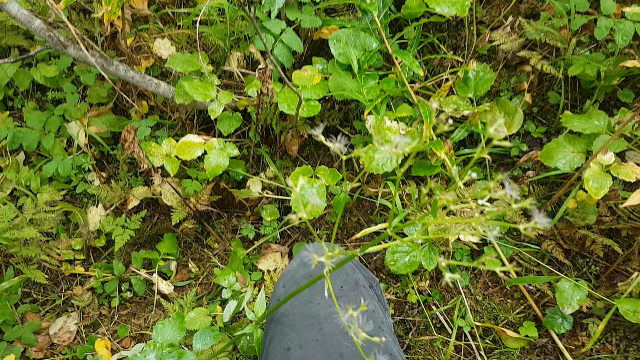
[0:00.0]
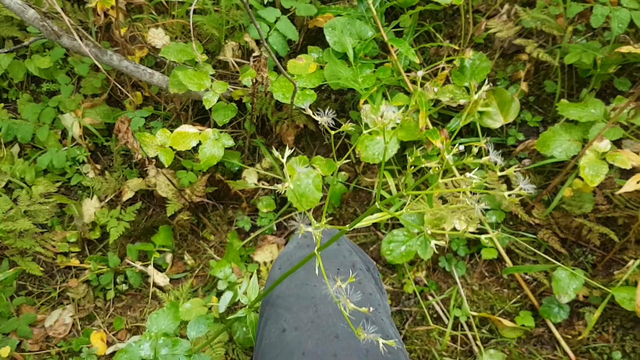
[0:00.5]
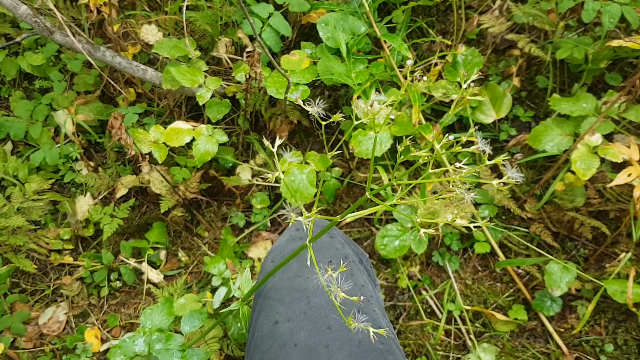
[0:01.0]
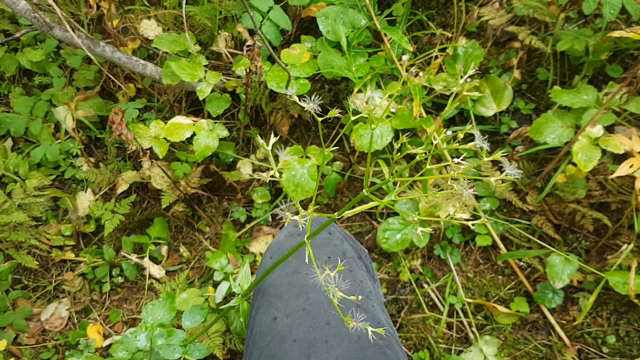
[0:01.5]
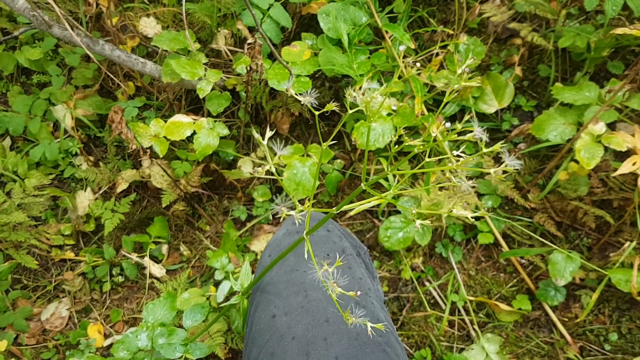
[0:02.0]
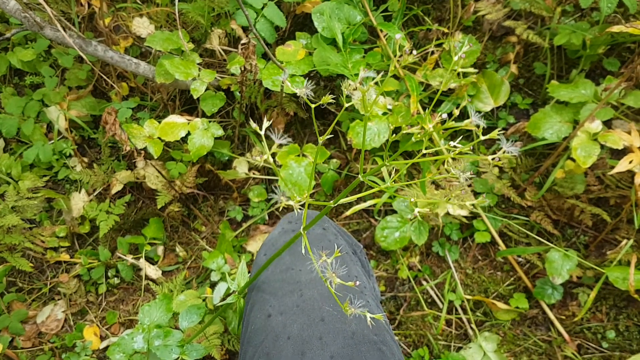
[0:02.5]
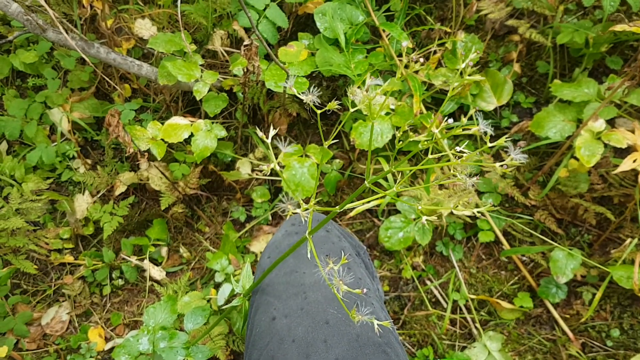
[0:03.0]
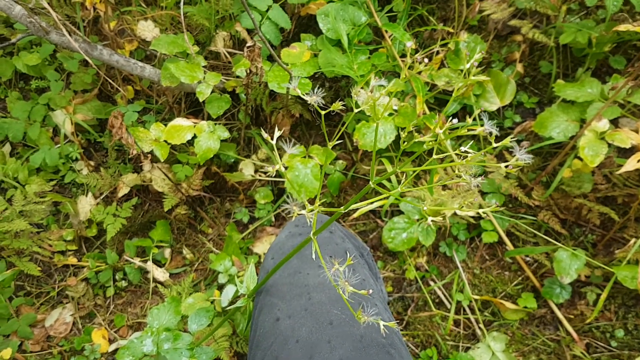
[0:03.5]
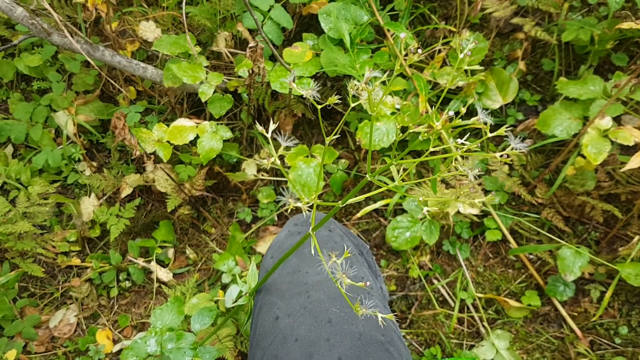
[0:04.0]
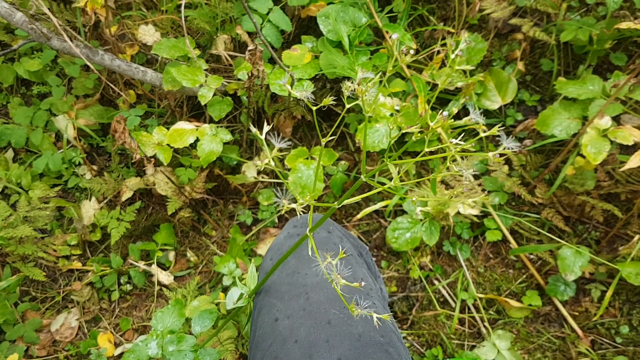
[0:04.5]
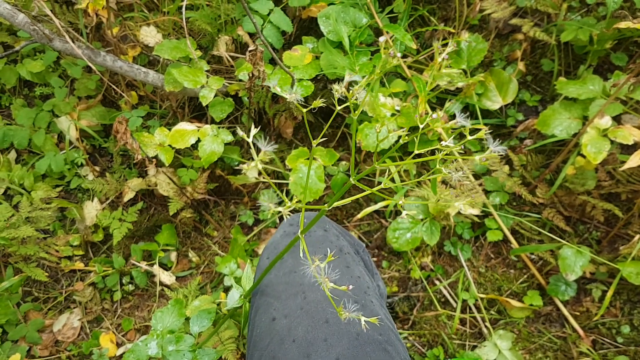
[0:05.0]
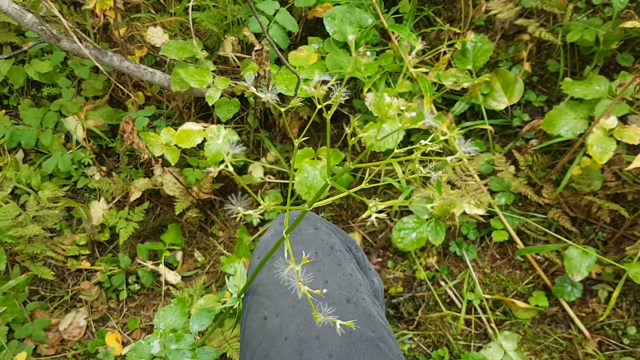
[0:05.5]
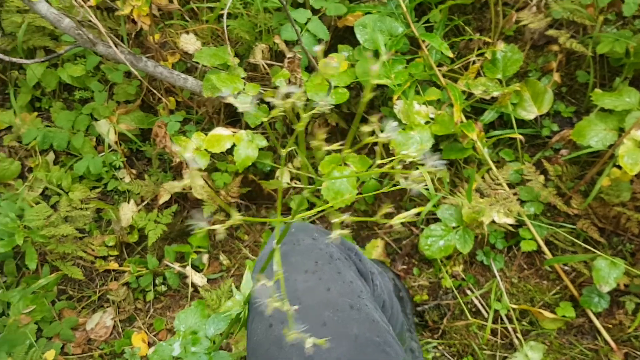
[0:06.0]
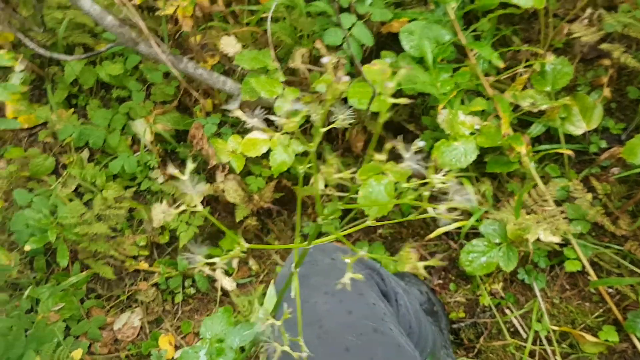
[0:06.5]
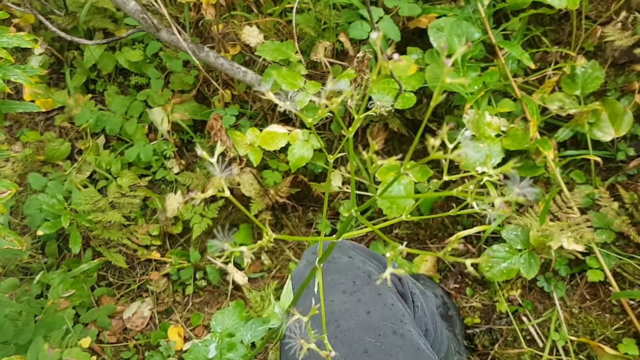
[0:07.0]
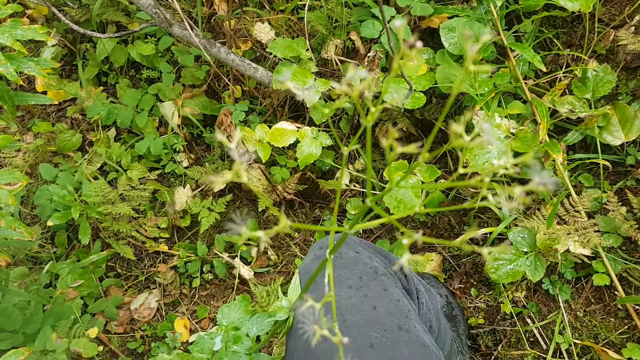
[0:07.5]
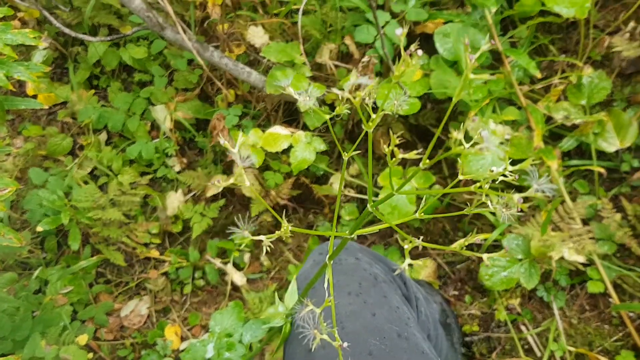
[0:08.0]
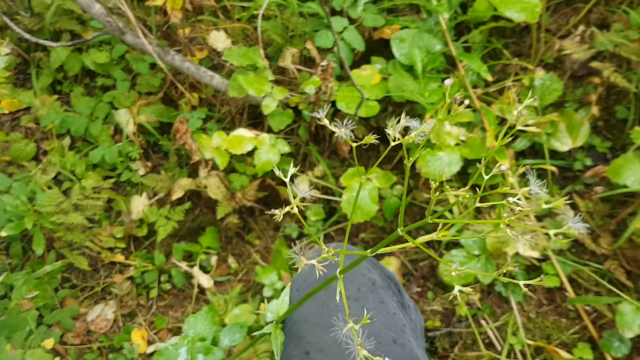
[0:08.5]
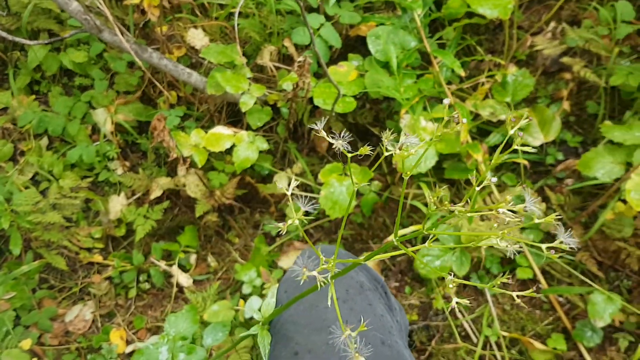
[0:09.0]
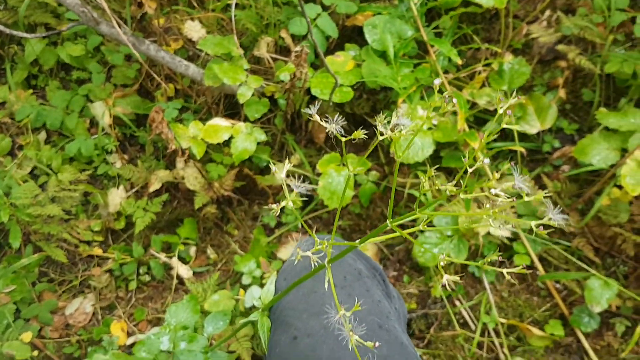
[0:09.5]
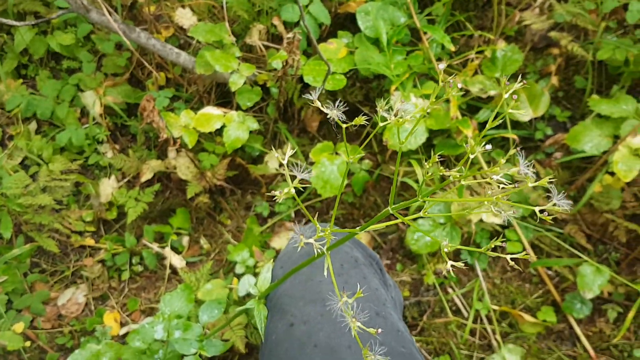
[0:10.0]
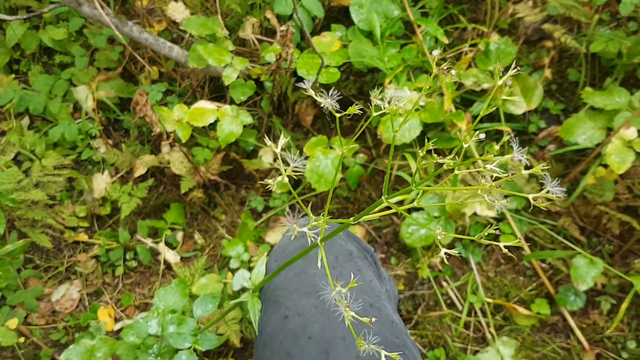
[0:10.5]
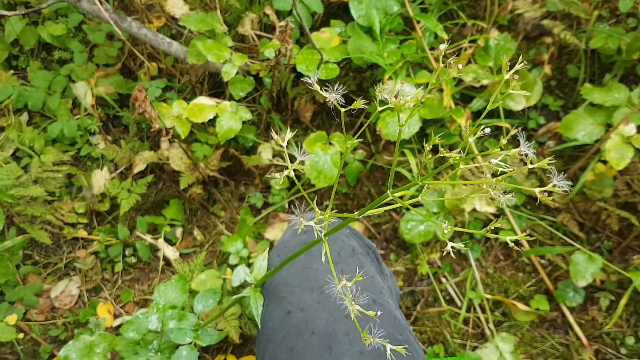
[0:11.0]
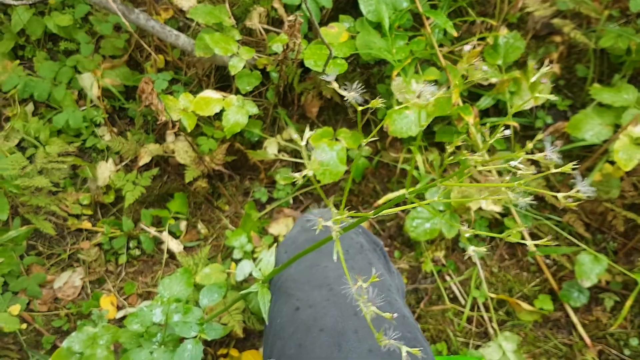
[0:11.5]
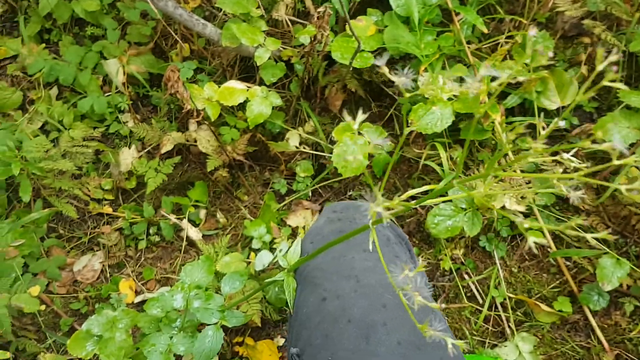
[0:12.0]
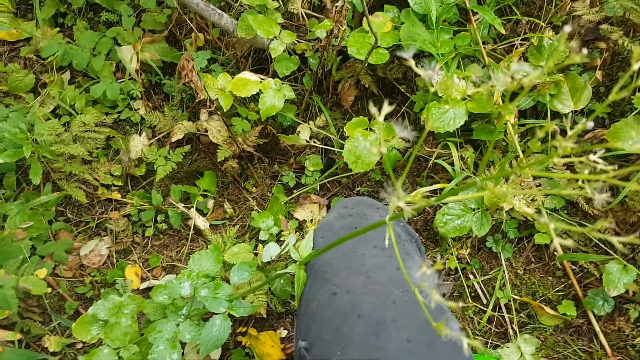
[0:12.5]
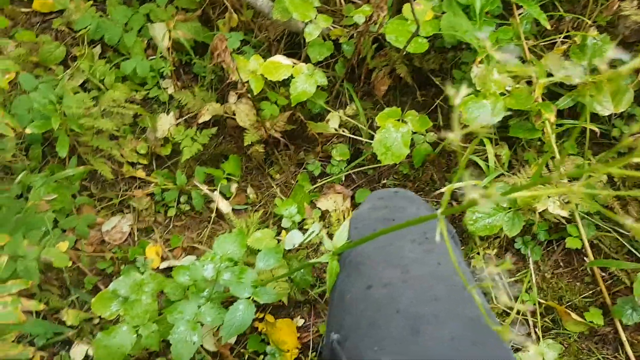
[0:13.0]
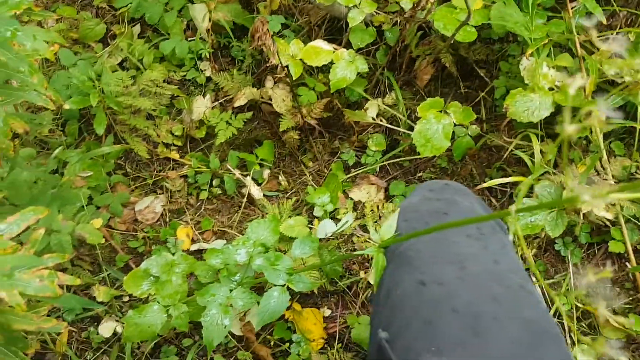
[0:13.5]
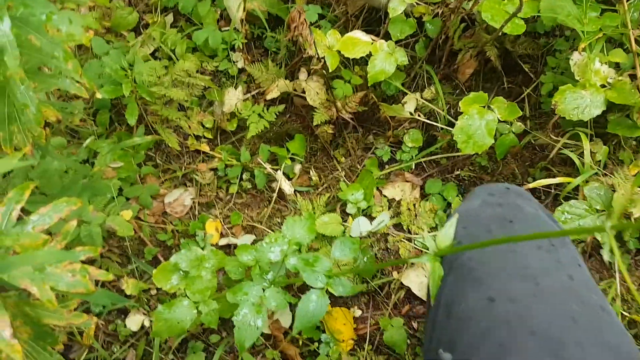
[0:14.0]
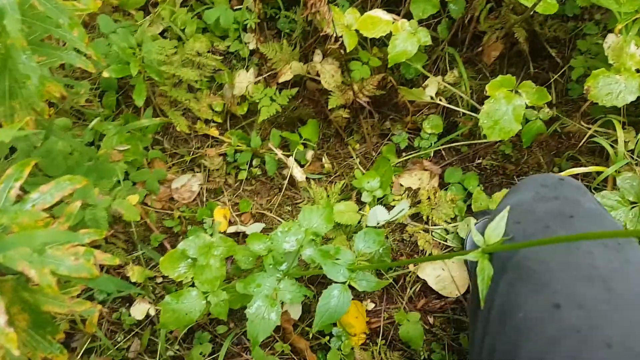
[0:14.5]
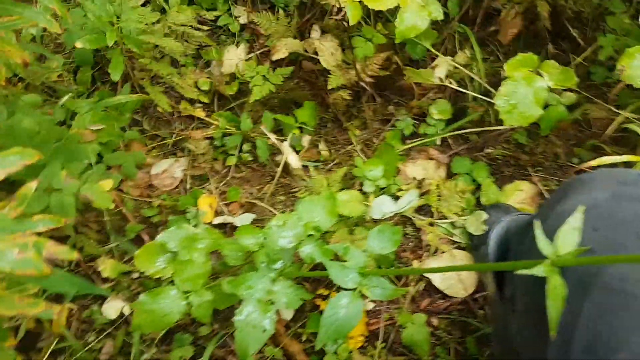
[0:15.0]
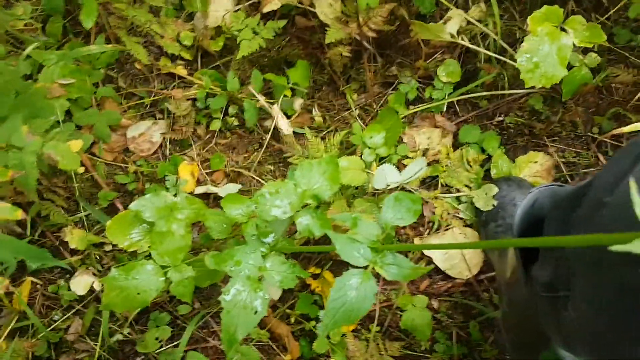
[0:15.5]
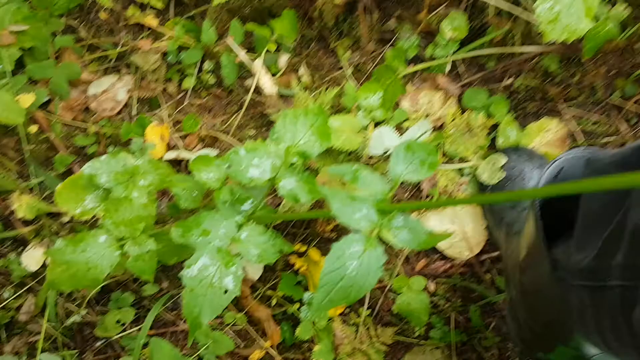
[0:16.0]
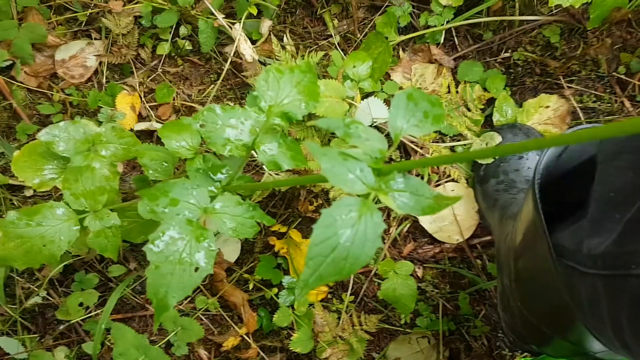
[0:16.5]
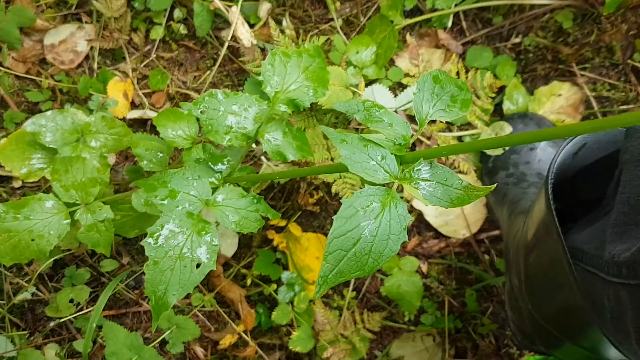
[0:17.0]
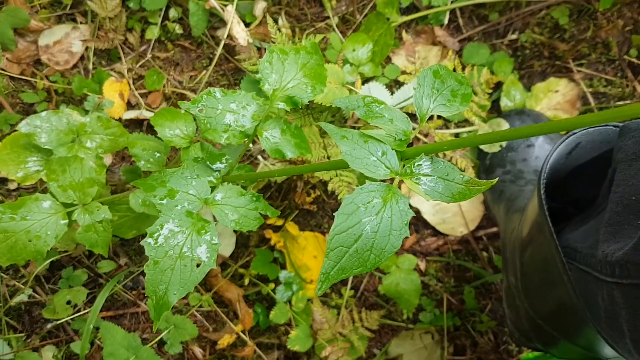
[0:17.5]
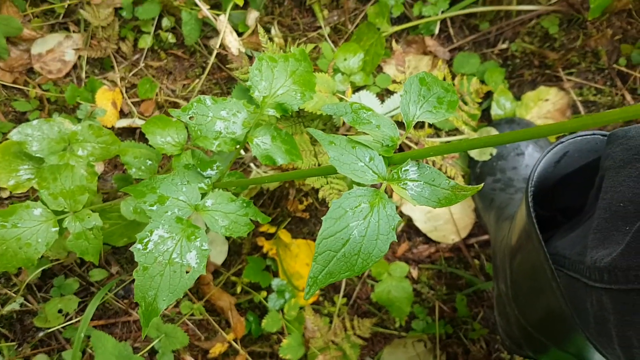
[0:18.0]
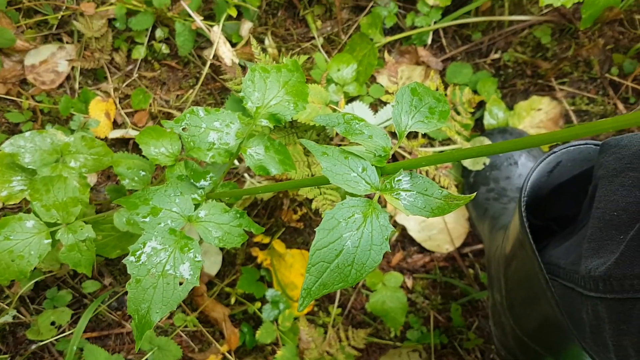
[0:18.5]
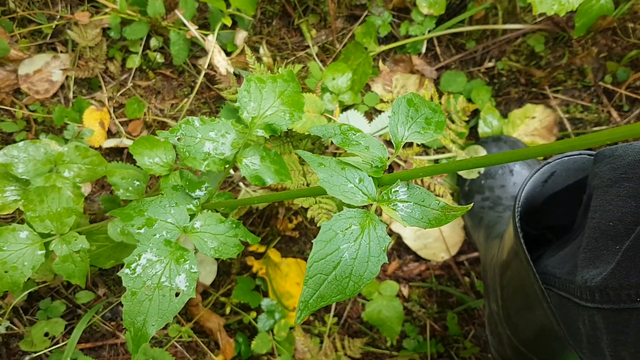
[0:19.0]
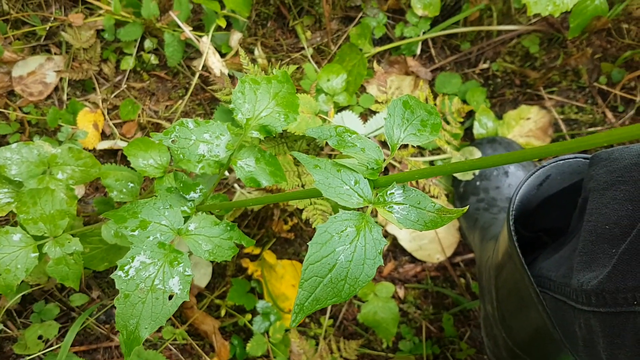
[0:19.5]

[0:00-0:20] Outdoors, green plants and someone's knee are visible; the person seems to be kneeling down, looking at a flower or some sort of plant with wide, frilly bits at the end. The camera zooms down to the base of the plant, showing its leaves, which have water, rain or dew on them. The person's knee is covered in grey trousers, and they wear a black shoe. The plants look generally foresty rather than tropical, and among the green leaves there are brown leaves on the ground that look dried, along with a small tree branch. The person seems to be examining the plant, both the floral bits at the top and the leaves further down, which are slightly pointy. Most of the leaves are a healthy green, some are tinged a bit yellow, and some are brown and dead.